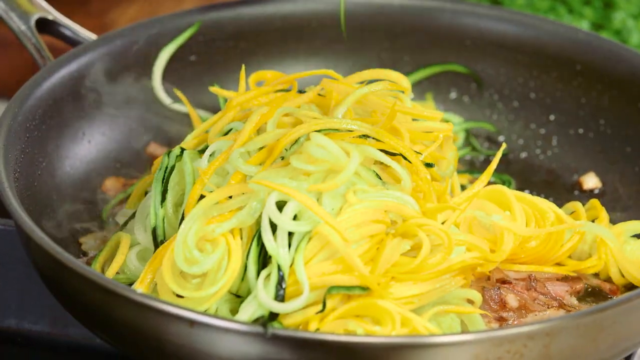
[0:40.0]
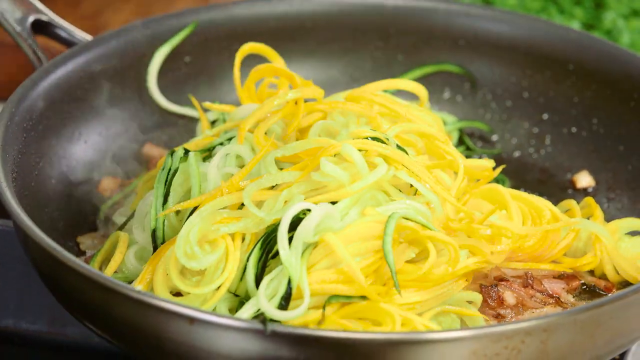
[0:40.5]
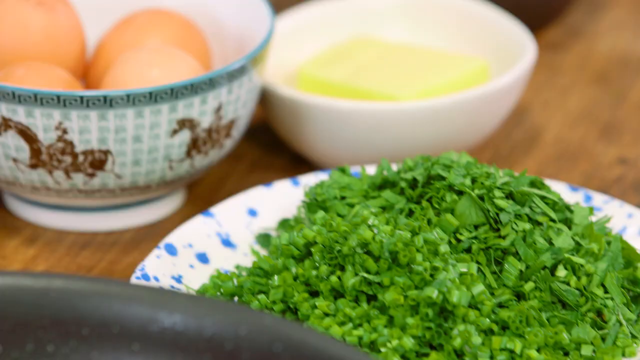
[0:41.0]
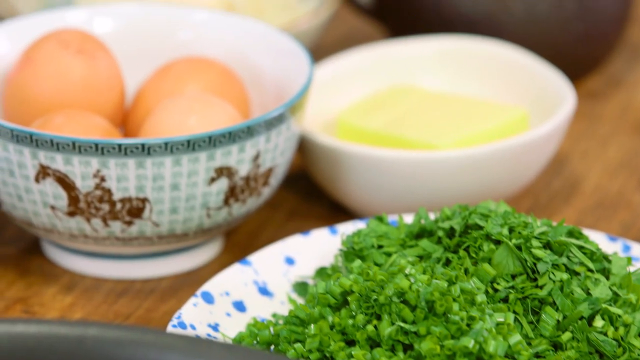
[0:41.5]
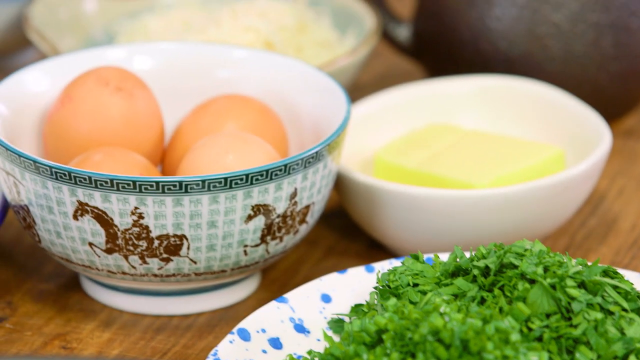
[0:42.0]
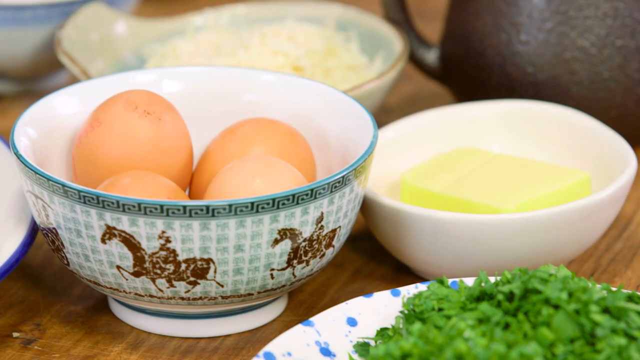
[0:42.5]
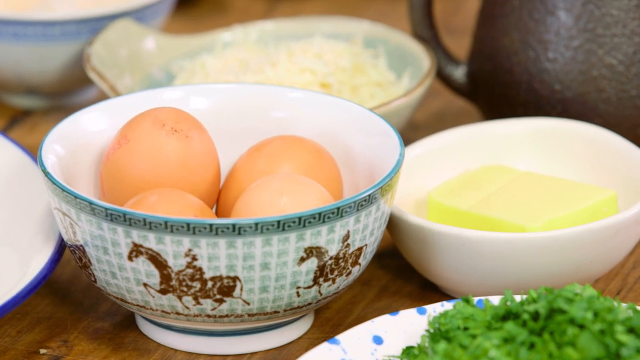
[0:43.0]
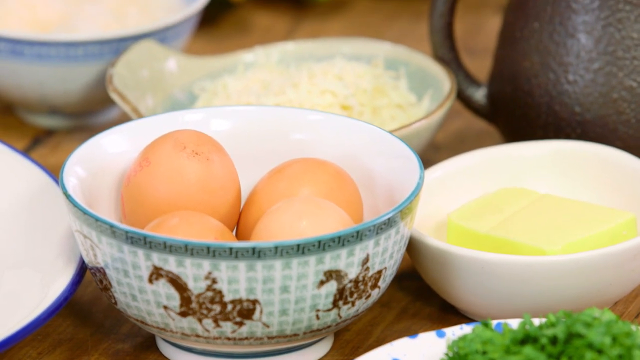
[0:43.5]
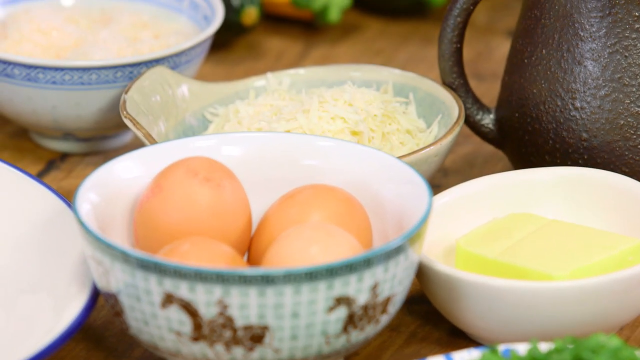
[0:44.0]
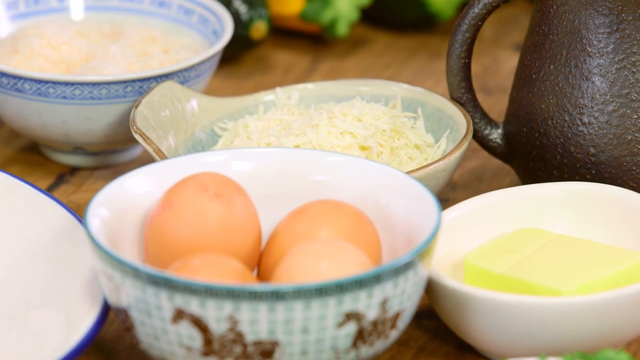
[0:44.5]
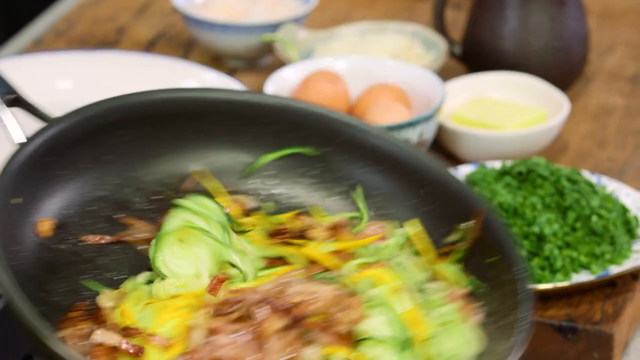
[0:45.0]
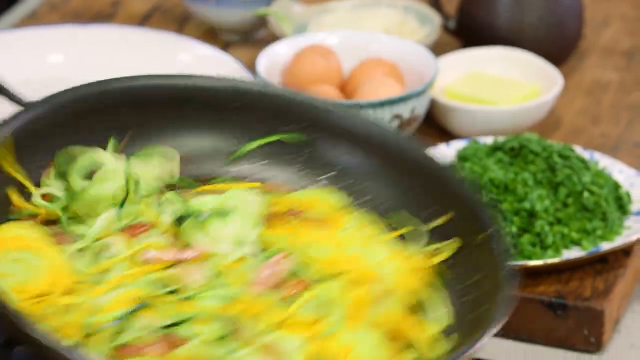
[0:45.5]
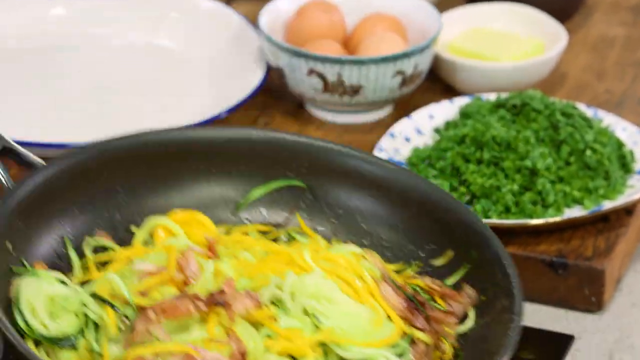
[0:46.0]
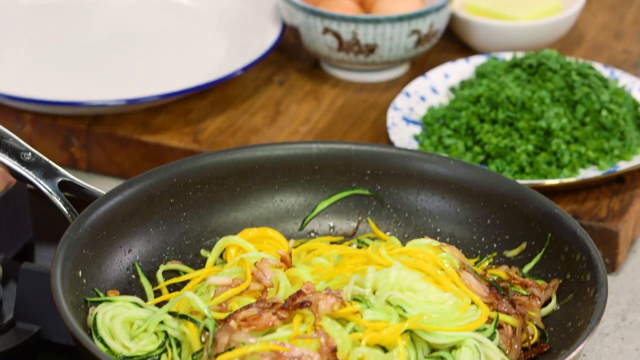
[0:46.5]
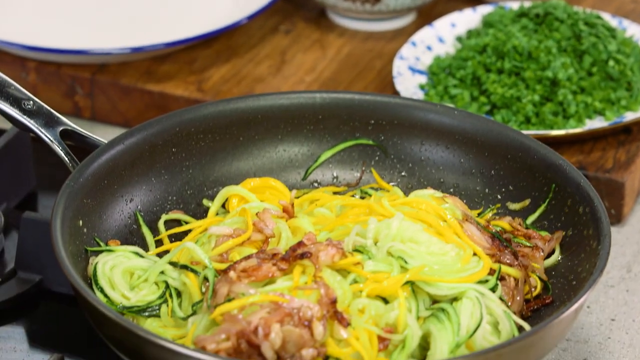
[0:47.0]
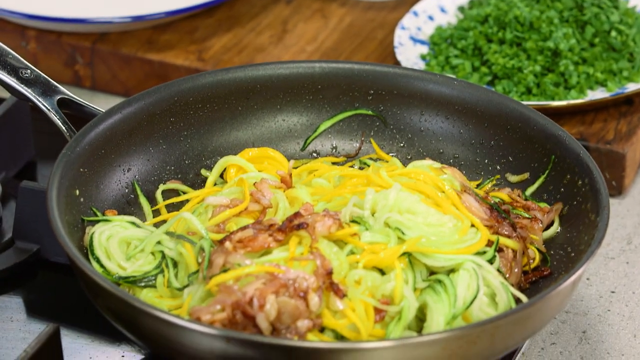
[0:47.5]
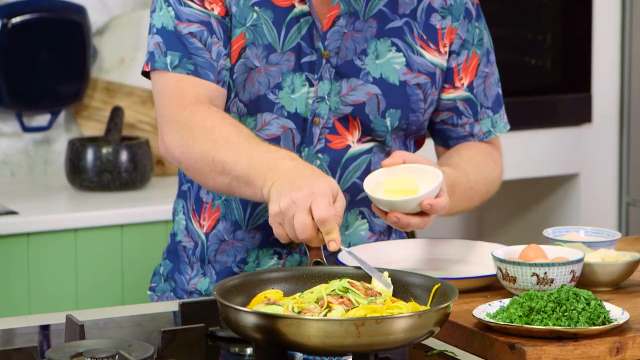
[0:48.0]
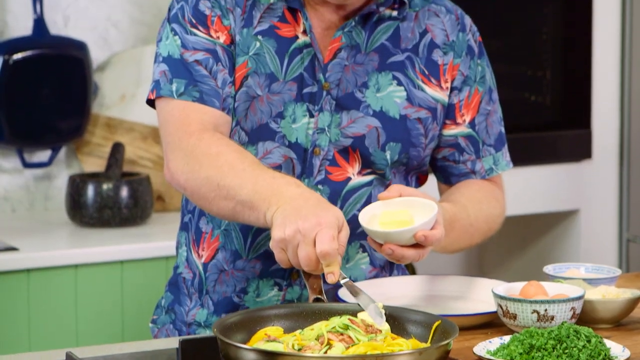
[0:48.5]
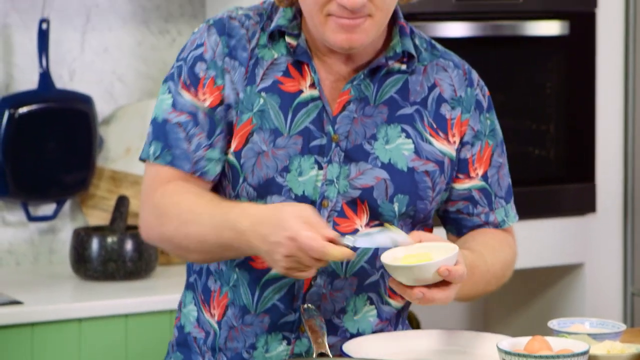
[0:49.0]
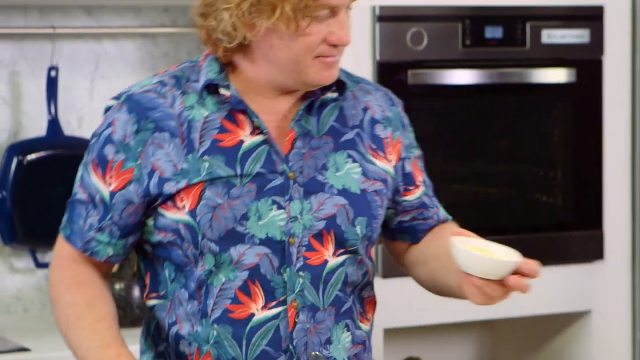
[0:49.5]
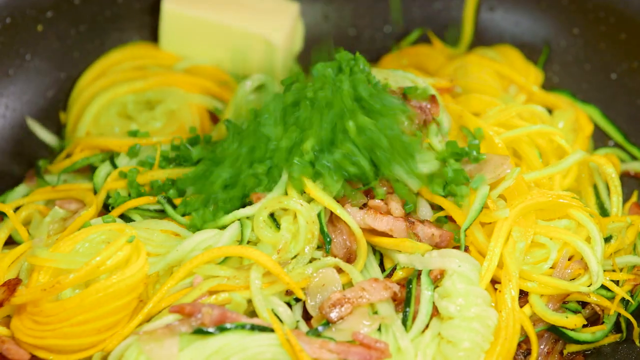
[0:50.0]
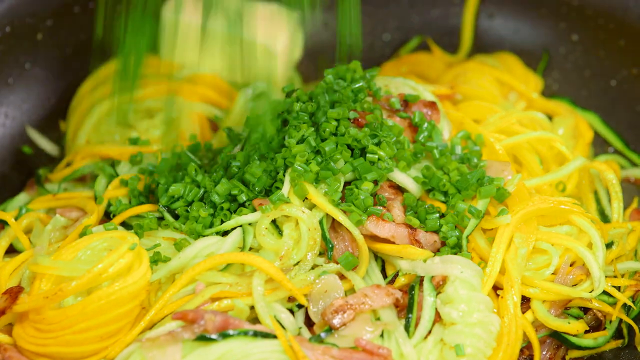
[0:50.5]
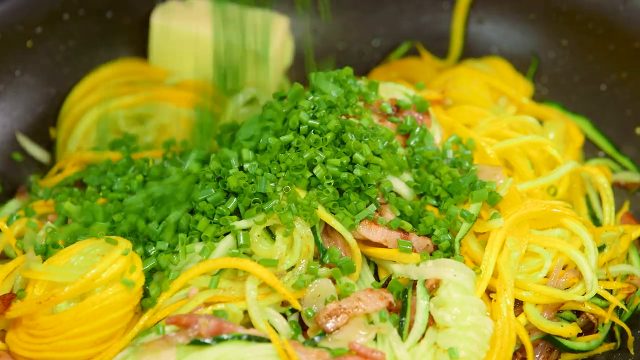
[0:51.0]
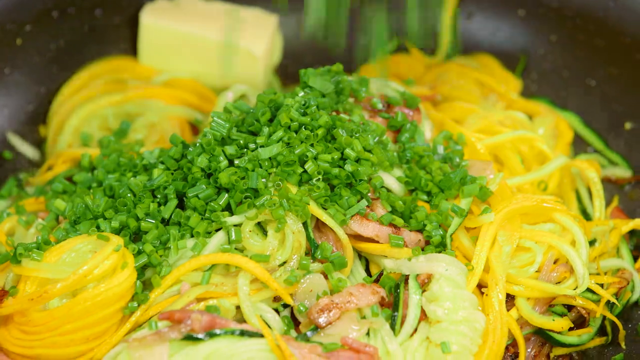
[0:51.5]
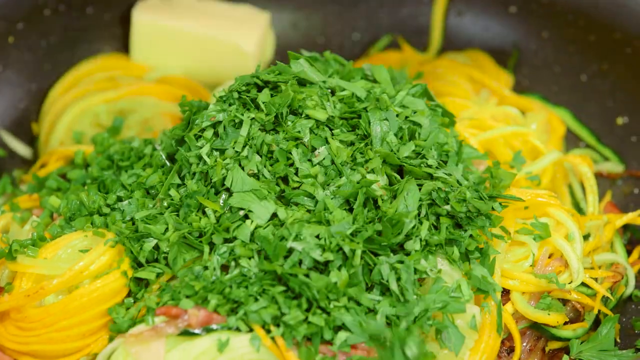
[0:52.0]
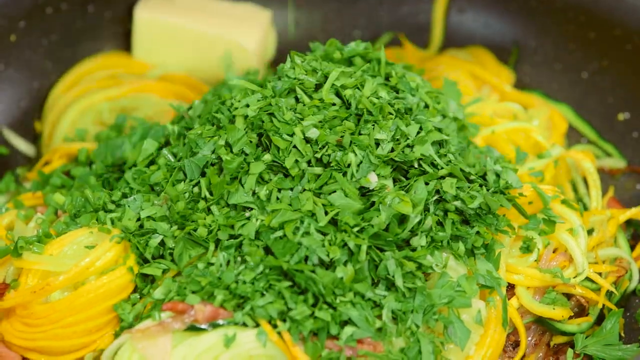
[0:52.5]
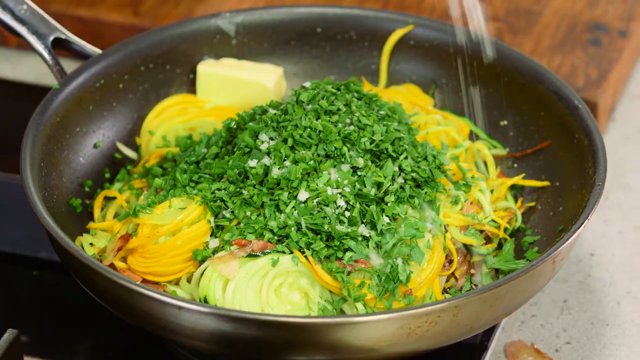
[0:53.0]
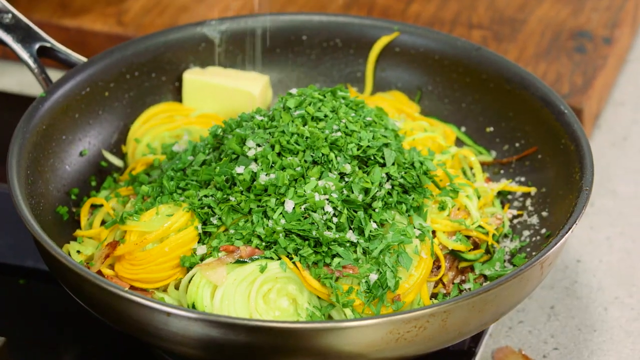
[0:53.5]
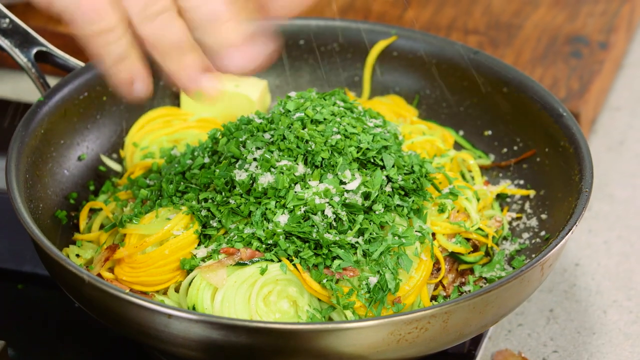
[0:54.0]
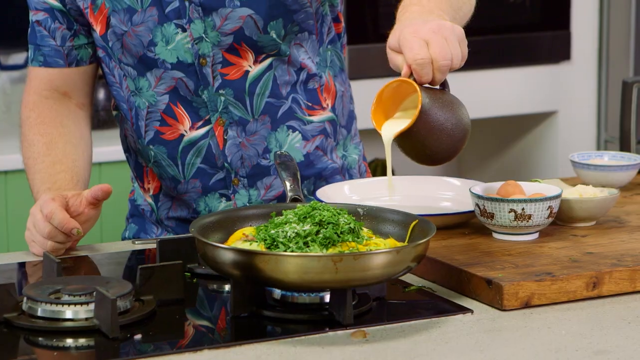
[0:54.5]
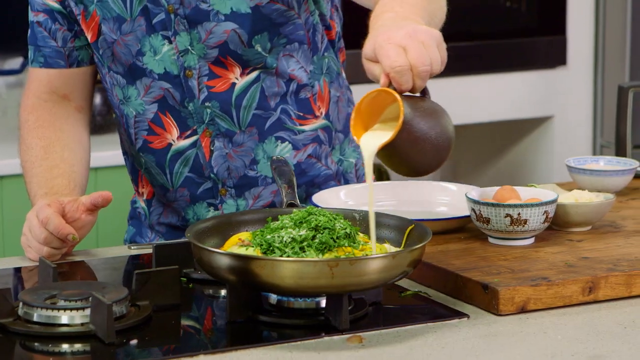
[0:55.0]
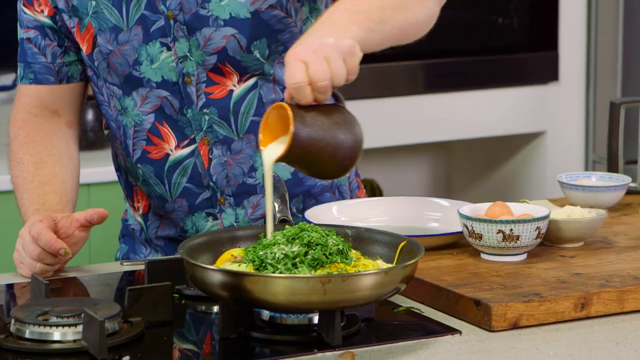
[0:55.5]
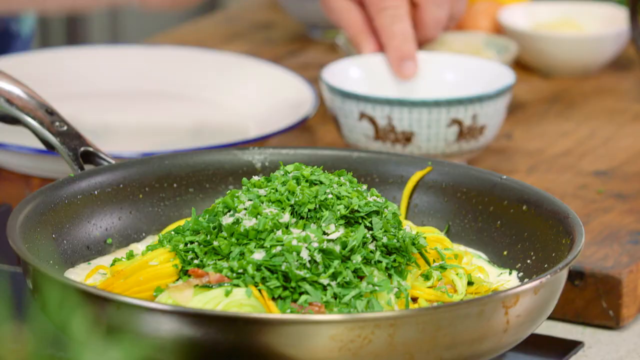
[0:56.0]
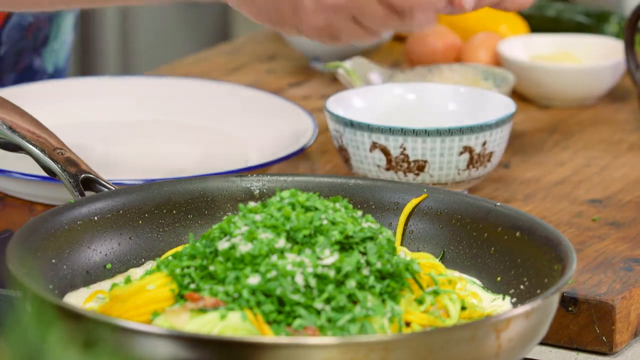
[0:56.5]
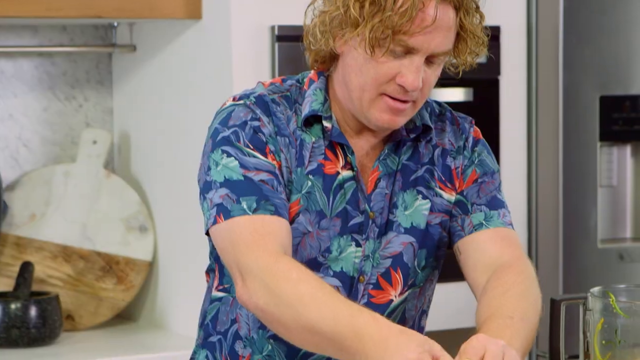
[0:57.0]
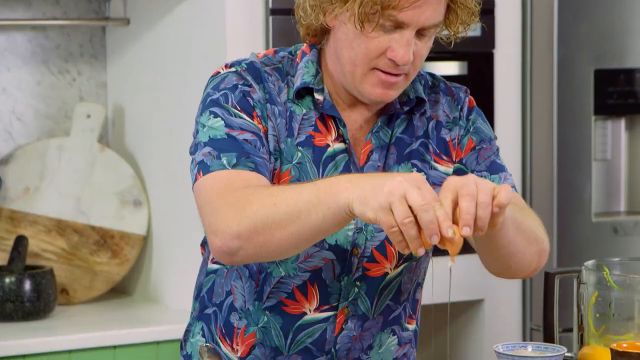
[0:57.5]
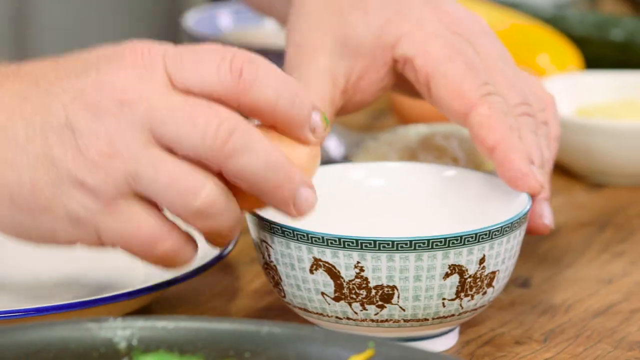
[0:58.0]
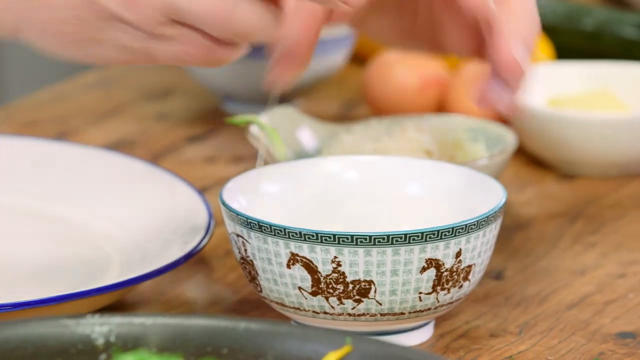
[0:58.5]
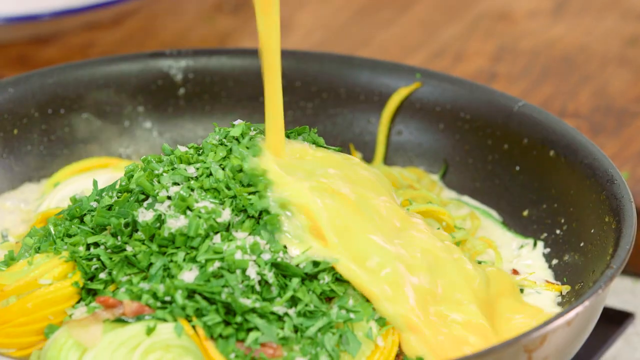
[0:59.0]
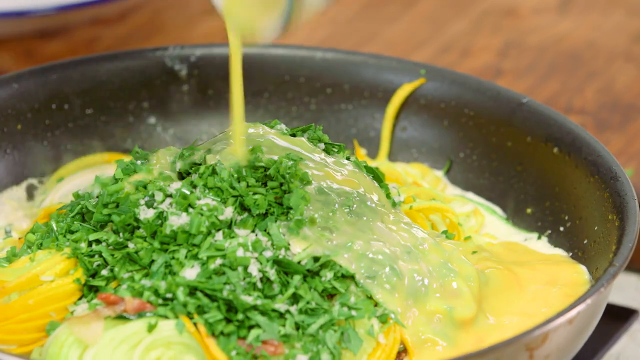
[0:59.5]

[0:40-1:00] The ground vegetables are in a pan on top of the stove, where they look like spaghetti, as thin and long as spaghetti strands. The mixture combines the yellow marrow and the green marrow, with bits of white from the insides of the green baby marrow. The chef has put the vegetables in the pan on low heat; onions have already been browned inside the pan. He adds a cup full of scallions and beats the eggs on the side, then continues mixing the contents of the pan. After that he adds the beaten eggs to the pan, adds salt and pepper, and continues cooking. Instead of stirring with a spoon, he picks up the pan and tosses the vegetables, almost like flipping them up and down inside the pan.